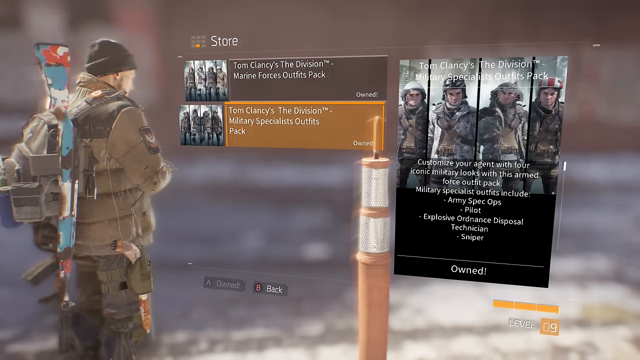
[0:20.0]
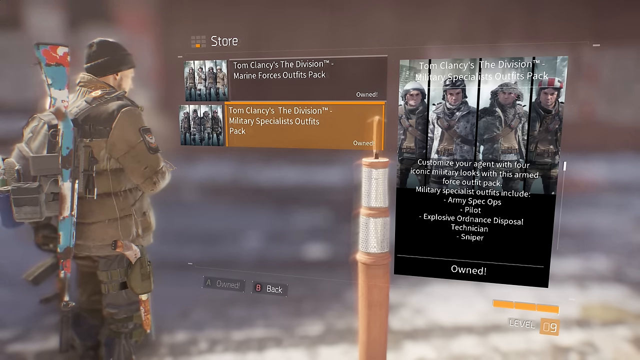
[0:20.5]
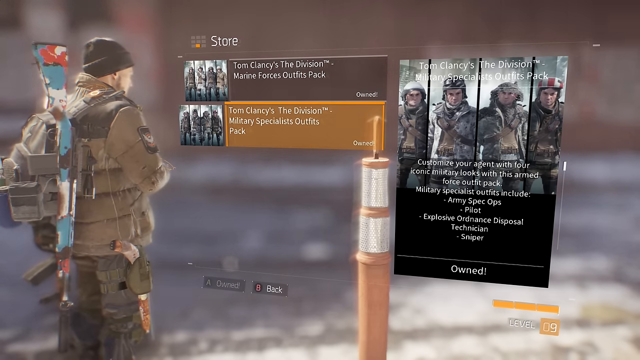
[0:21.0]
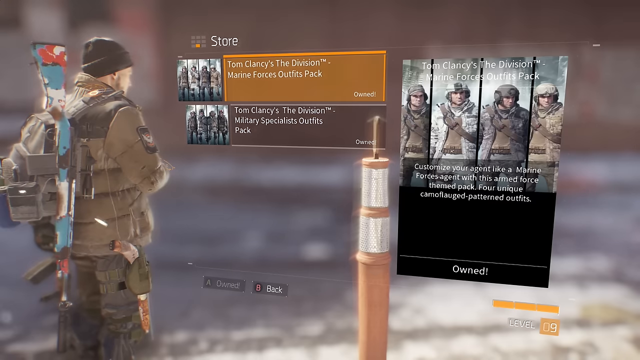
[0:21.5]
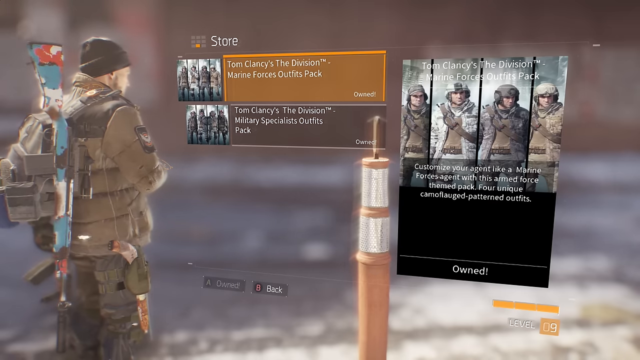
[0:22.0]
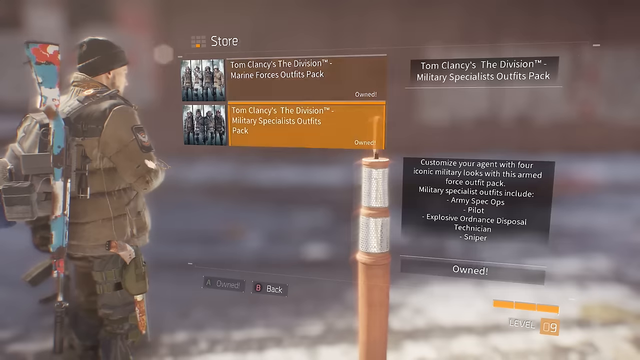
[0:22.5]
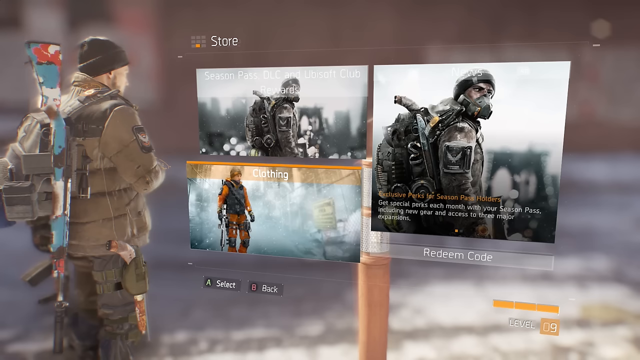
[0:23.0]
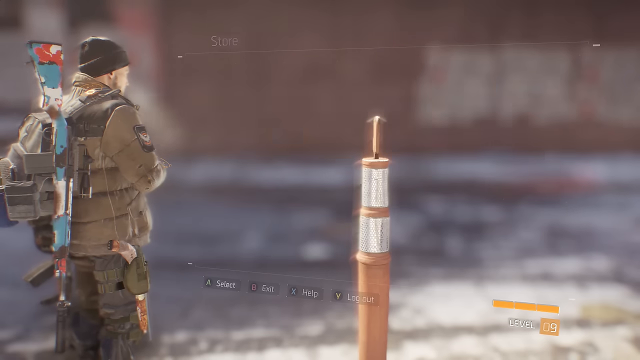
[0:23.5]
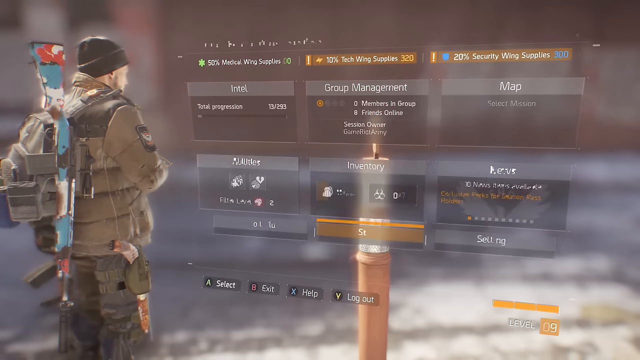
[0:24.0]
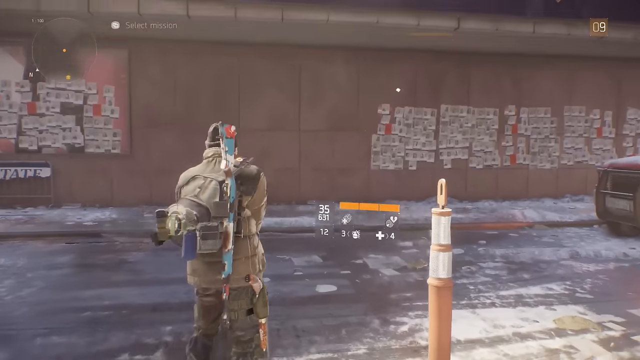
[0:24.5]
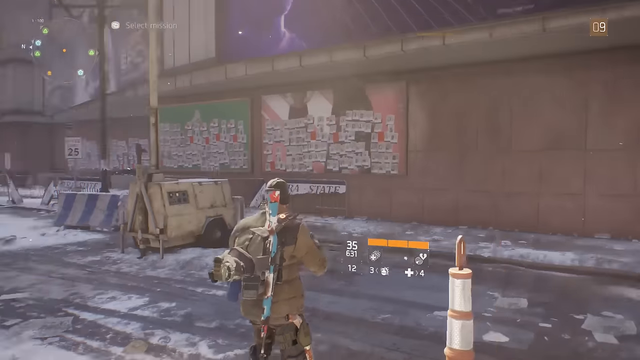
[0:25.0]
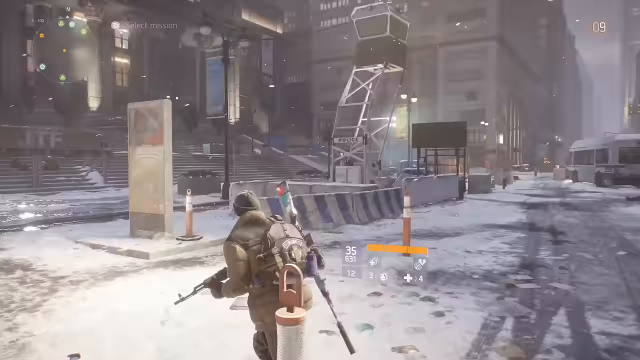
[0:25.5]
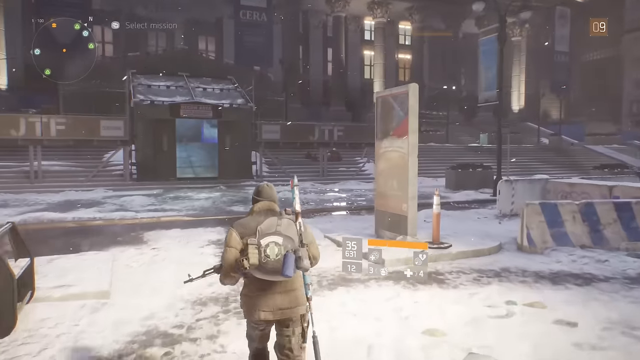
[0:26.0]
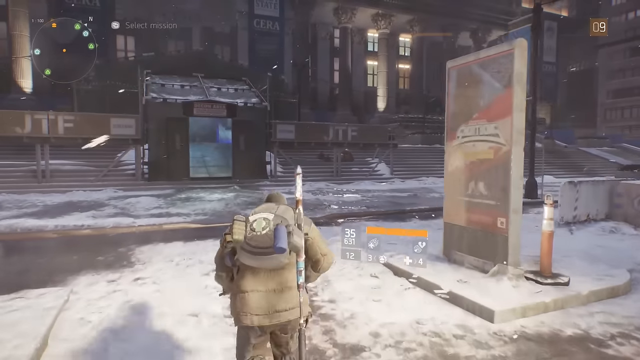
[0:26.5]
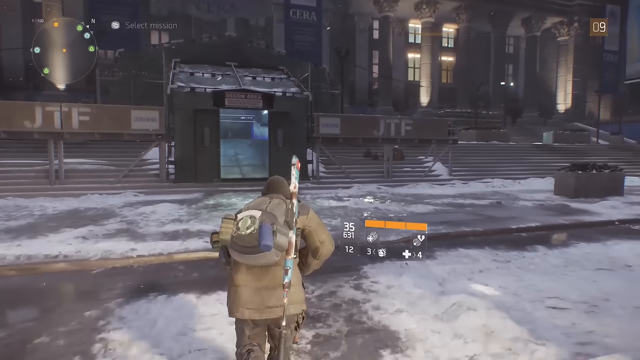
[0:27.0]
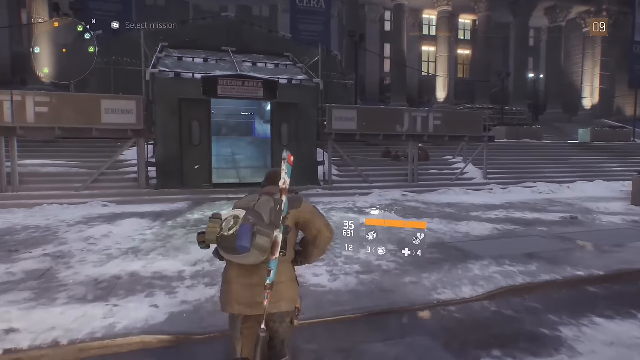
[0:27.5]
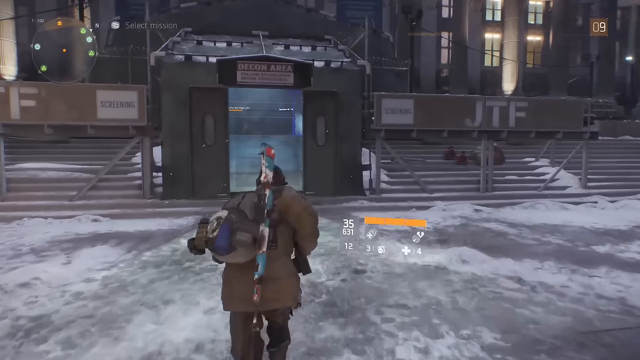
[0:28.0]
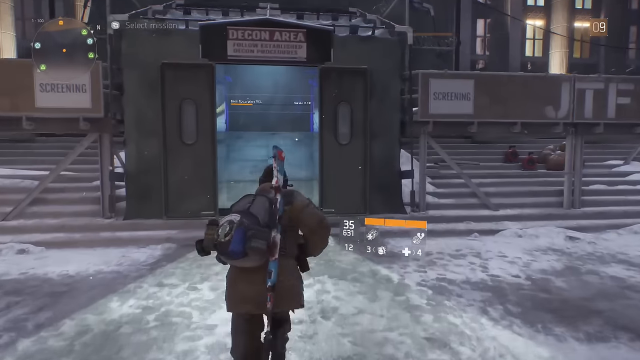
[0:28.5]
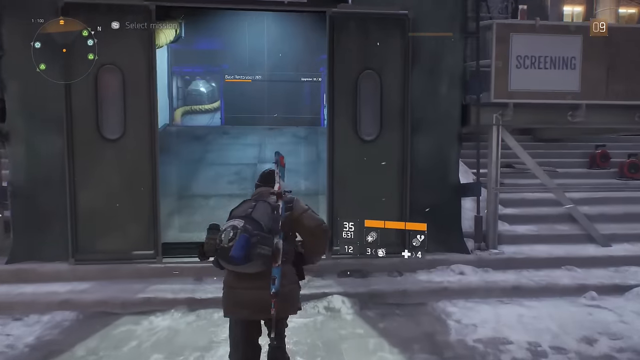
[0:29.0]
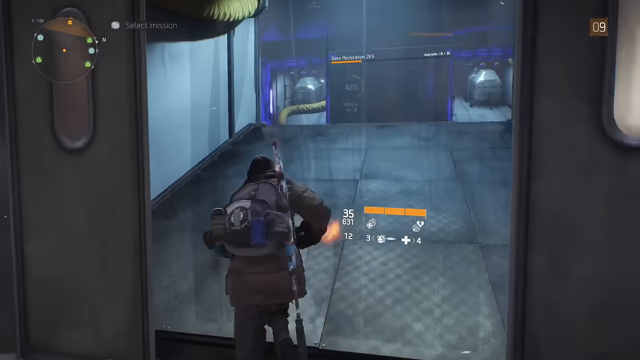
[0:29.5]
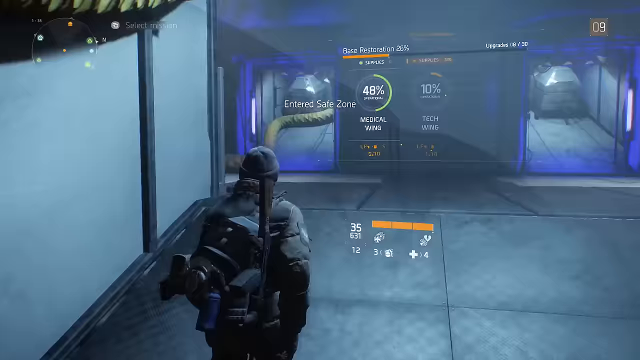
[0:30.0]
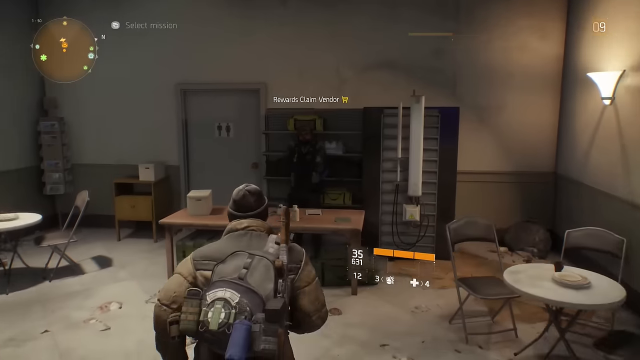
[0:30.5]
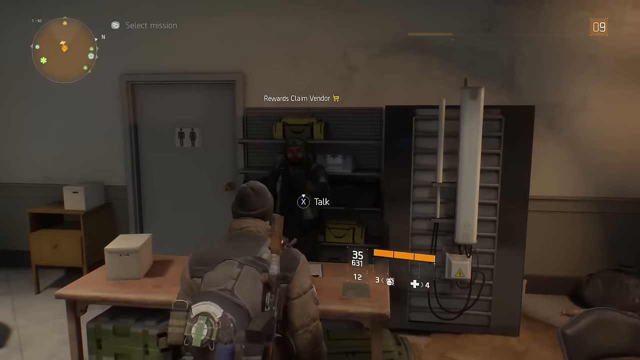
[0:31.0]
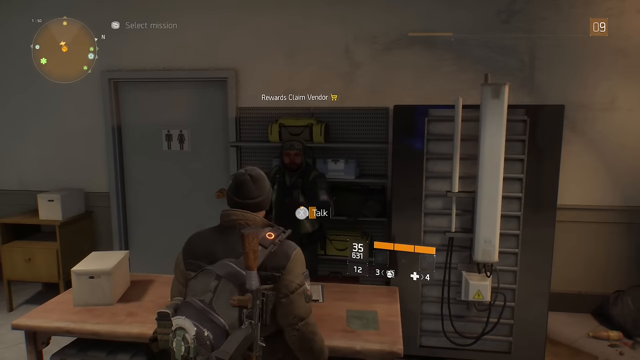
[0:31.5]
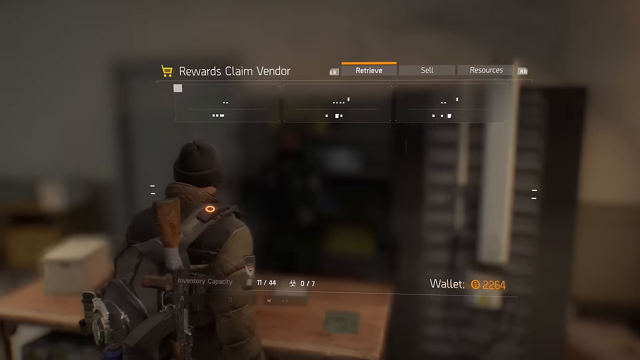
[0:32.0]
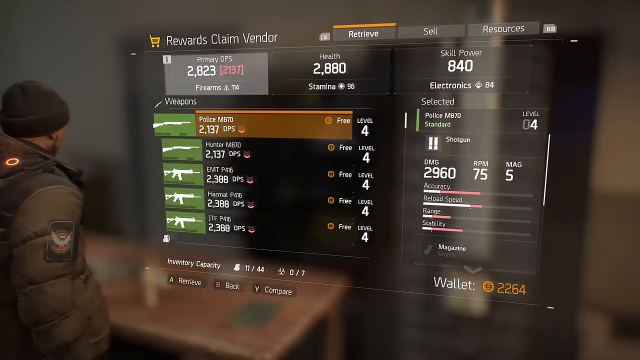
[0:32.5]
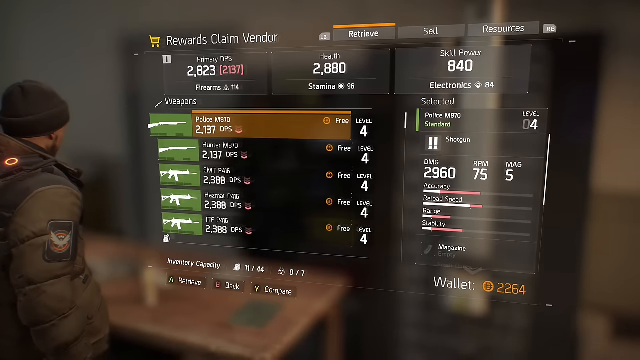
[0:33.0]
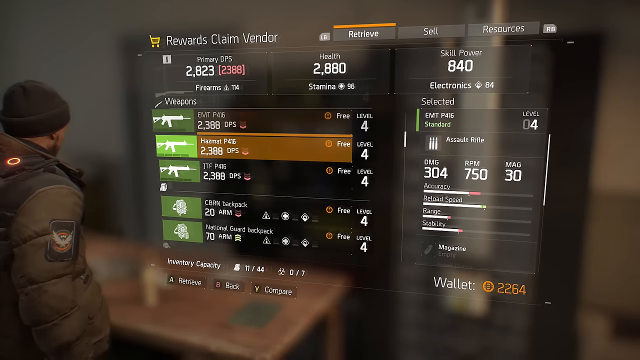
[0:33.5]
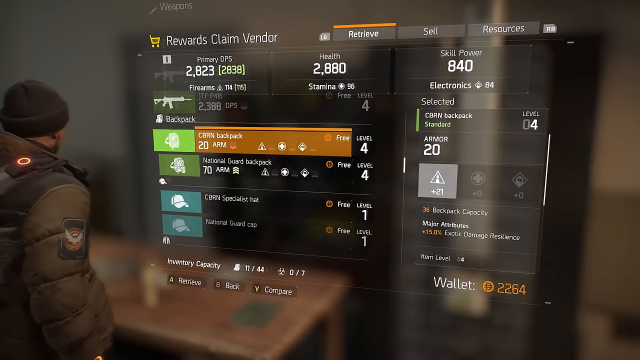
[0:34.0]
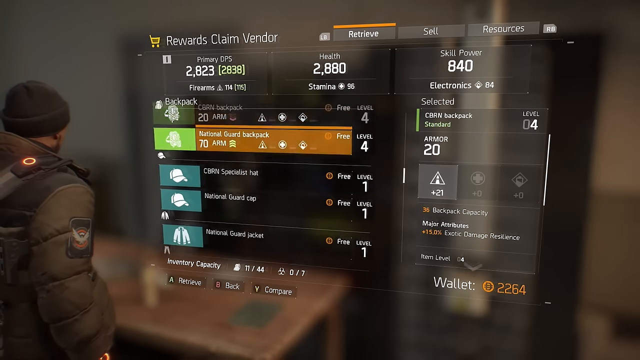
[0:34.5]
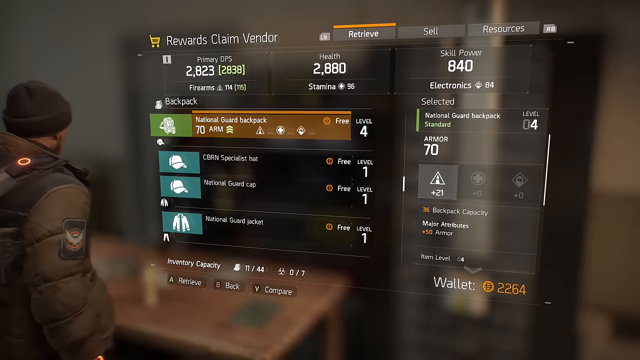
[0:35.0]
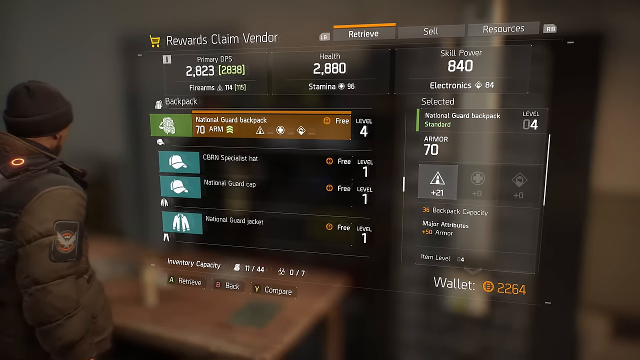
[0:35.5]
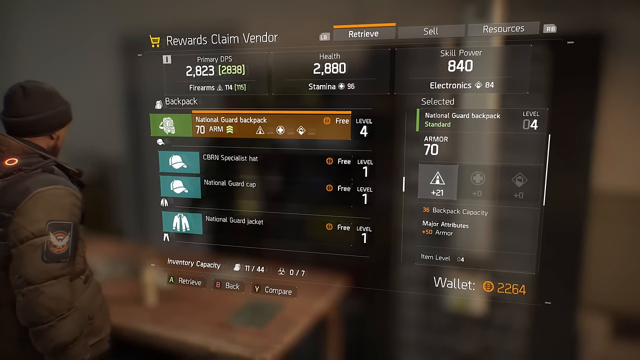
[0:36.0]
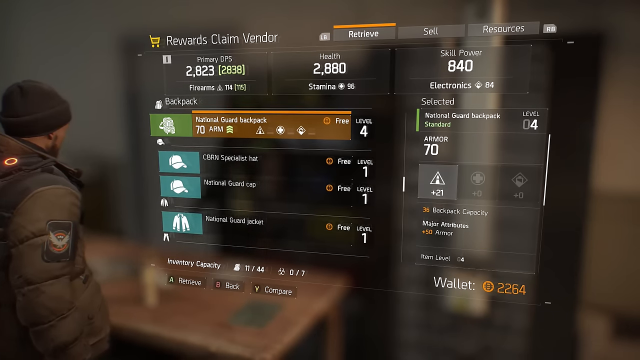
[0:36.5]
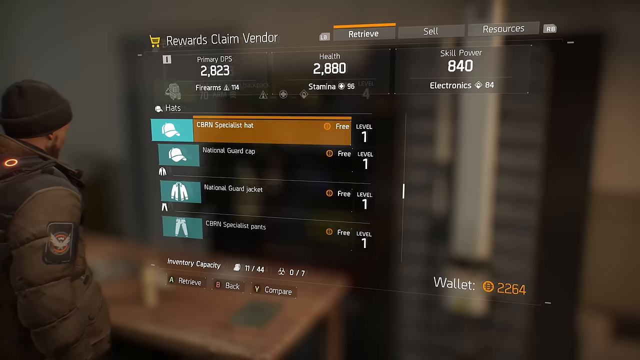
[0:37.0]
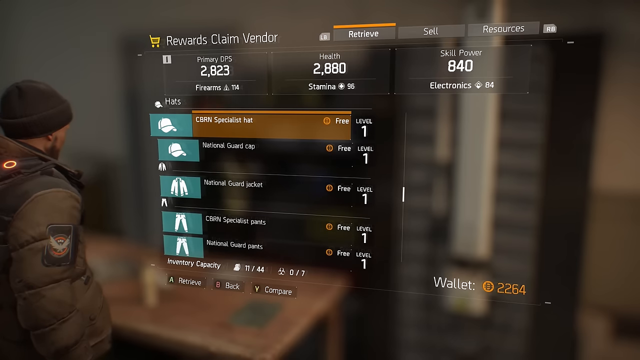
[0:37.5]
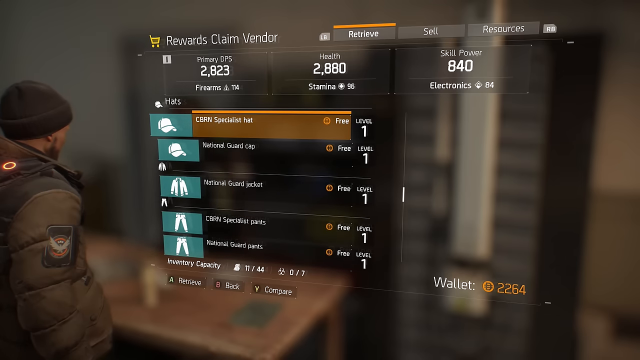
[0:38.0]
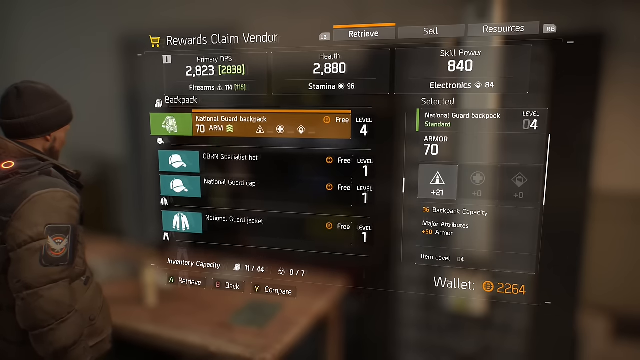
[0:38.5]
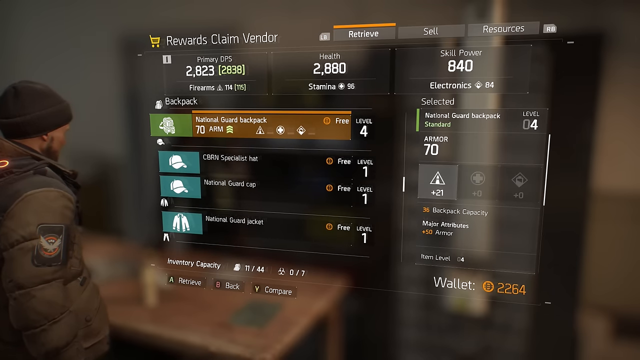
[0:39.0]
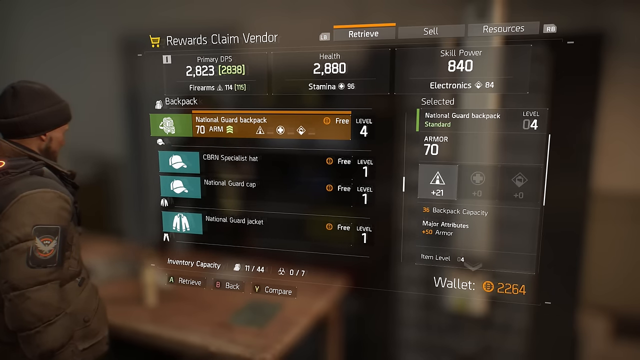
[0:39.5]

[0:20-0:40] The outfit pack screen shows two different outfit packs to pick from. The bottom one, Tom Clancy The Division military specialist outfits pack, is highlighted. The selection highlights one and then the other, and then the view returns to the character, still in third person, running forward toward a doorway. They run through the doorway and end up in a room with a rectangular table in front of them. Behind the table is a bookshelf; to the left of the bookshelf is a door with a sign for men and women, and to the left of that is a table stand with a white box on top. The view then goes back to the menu, where "Firearms" is at the top. Under that it says "Police M870," under that "Hunter," and three other guns are listed after the first two. To the right are specifics on the first, highlighted gun, the police standard shotgun. The menu scrolls through the guns to the National Guard backpack, then goes to hats and back up to the backpack.